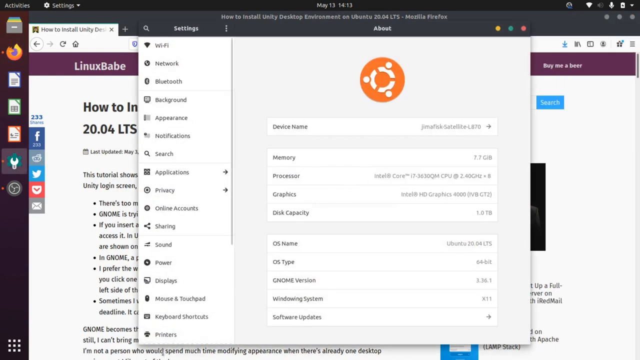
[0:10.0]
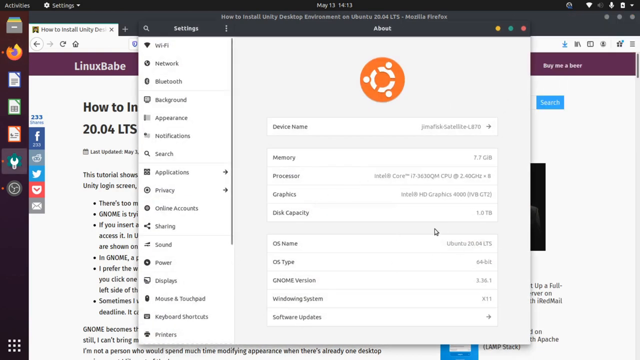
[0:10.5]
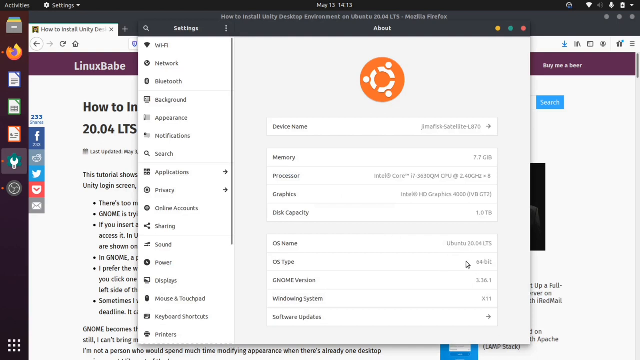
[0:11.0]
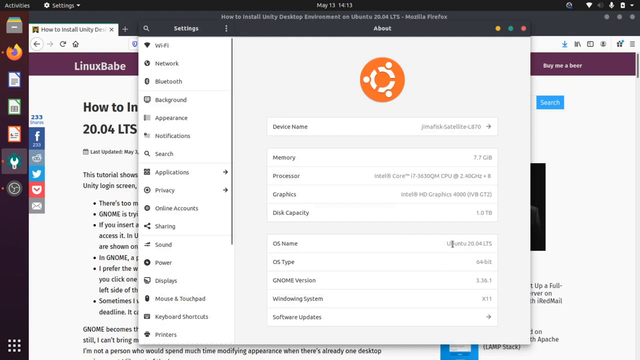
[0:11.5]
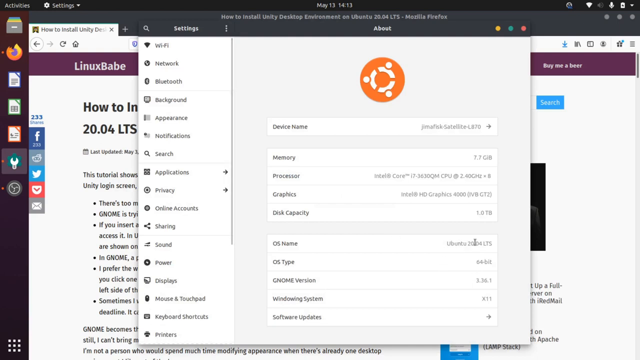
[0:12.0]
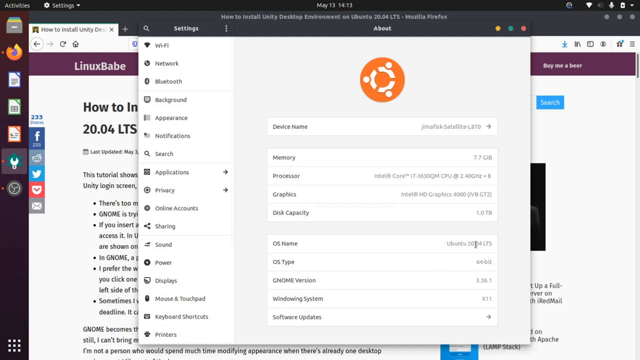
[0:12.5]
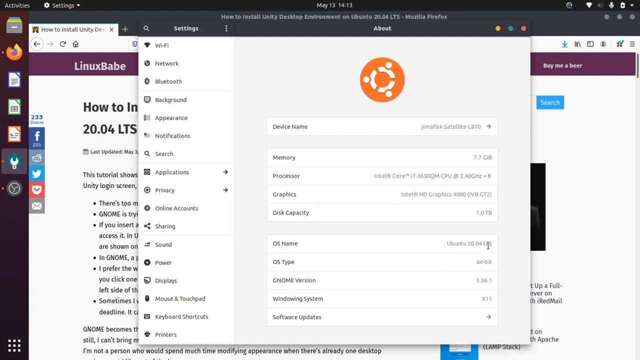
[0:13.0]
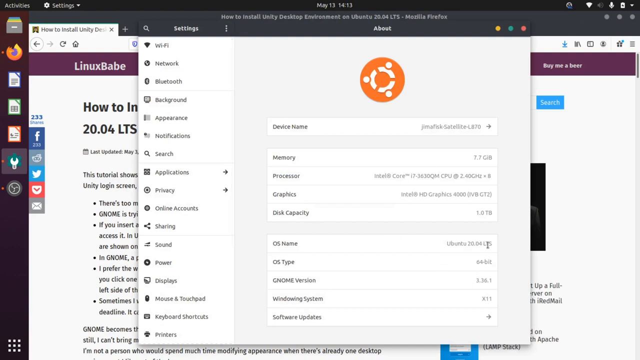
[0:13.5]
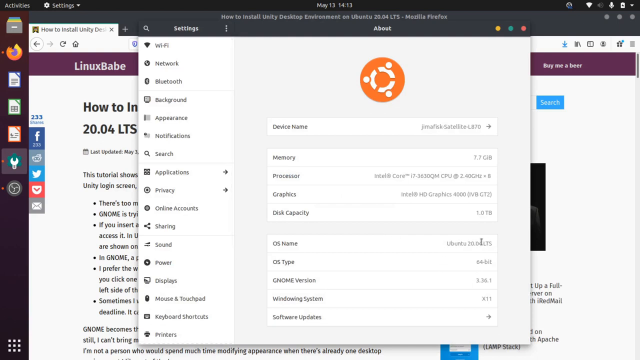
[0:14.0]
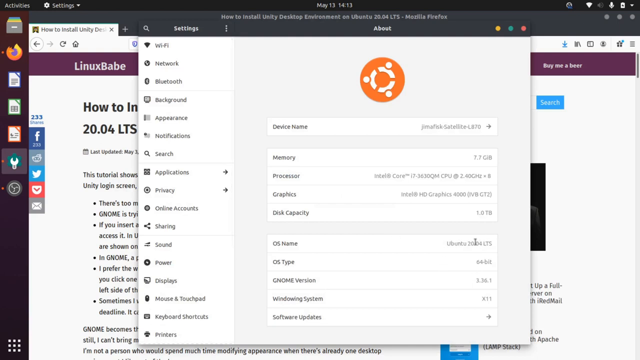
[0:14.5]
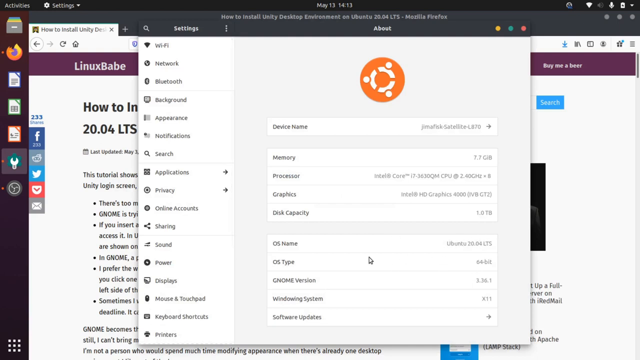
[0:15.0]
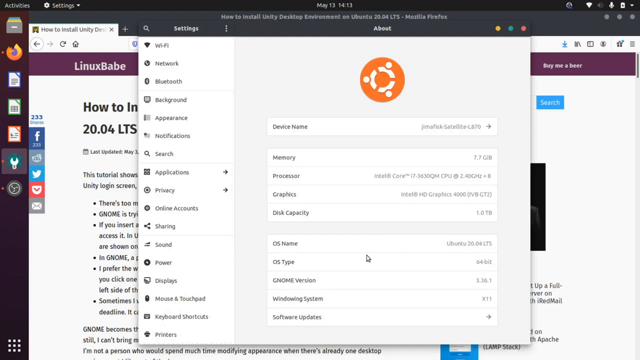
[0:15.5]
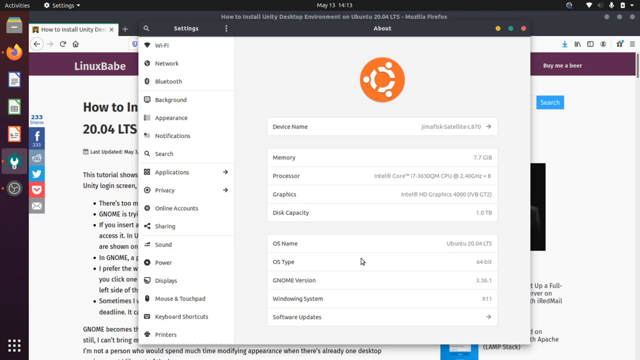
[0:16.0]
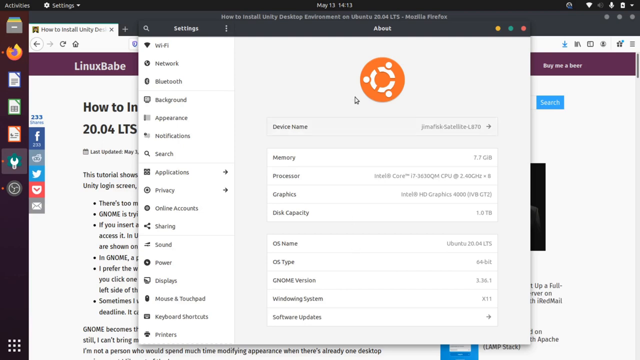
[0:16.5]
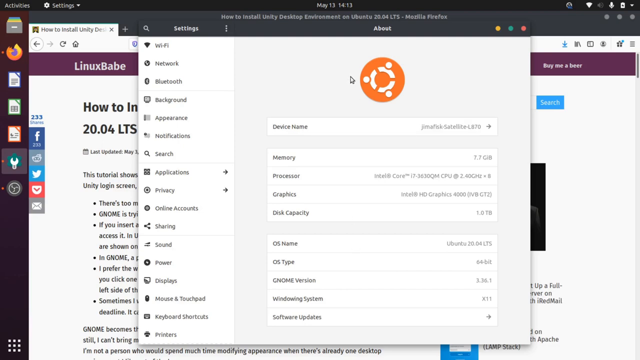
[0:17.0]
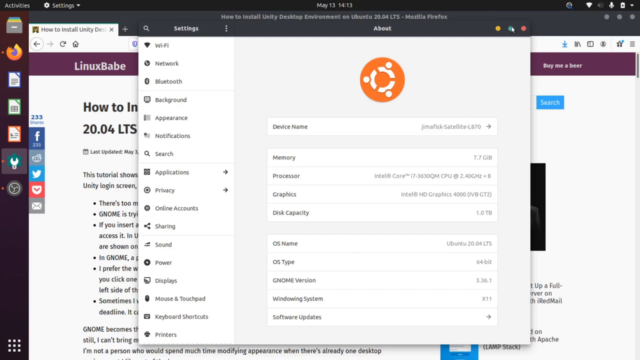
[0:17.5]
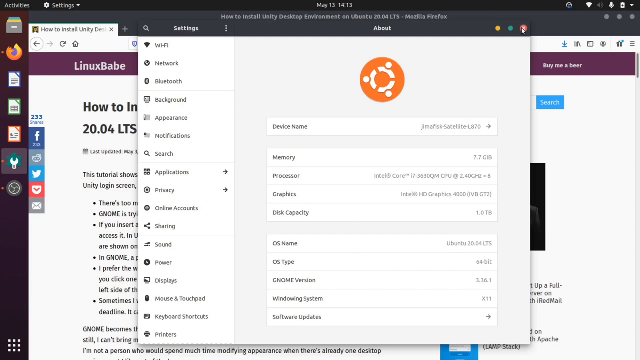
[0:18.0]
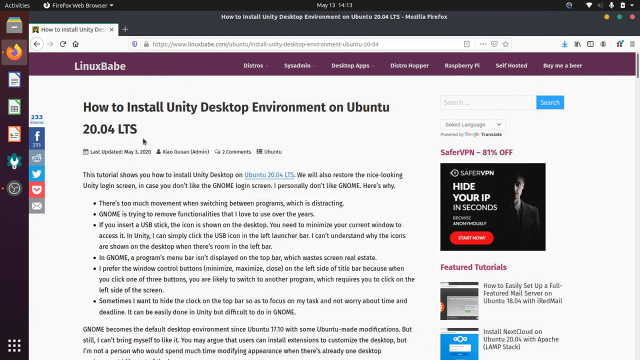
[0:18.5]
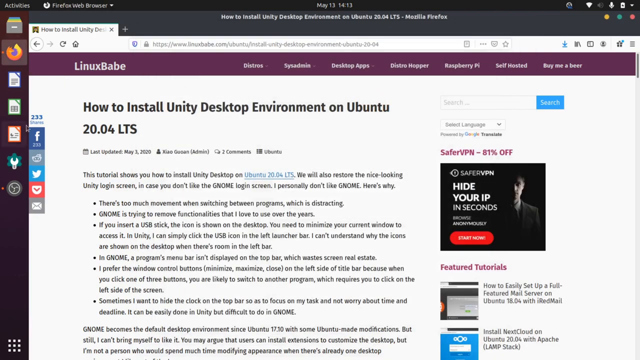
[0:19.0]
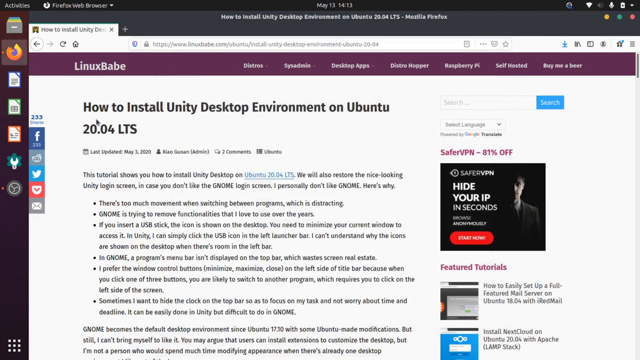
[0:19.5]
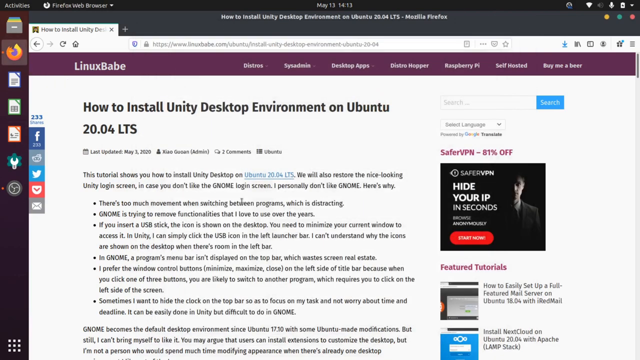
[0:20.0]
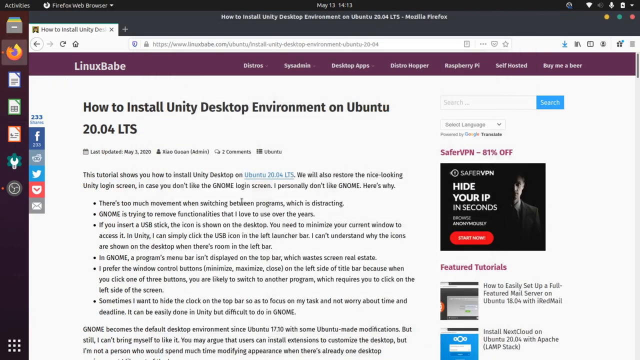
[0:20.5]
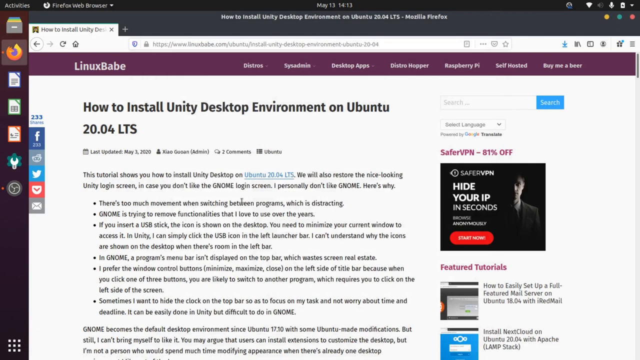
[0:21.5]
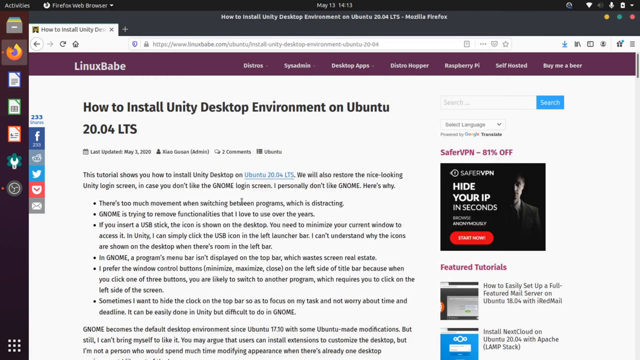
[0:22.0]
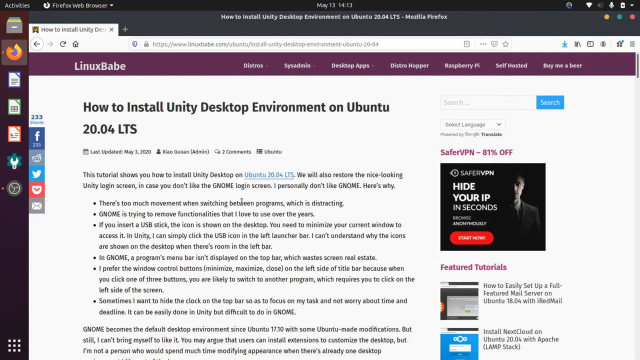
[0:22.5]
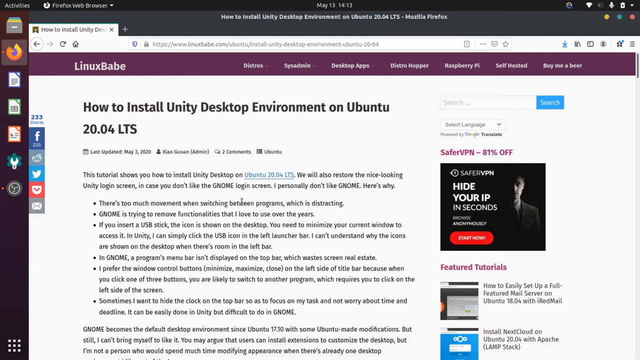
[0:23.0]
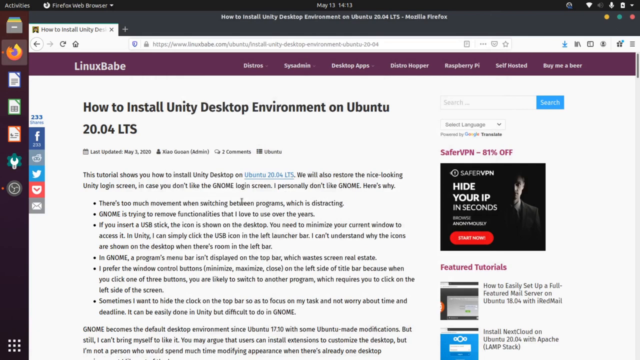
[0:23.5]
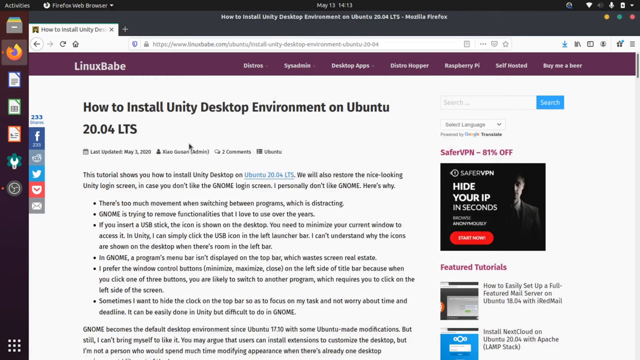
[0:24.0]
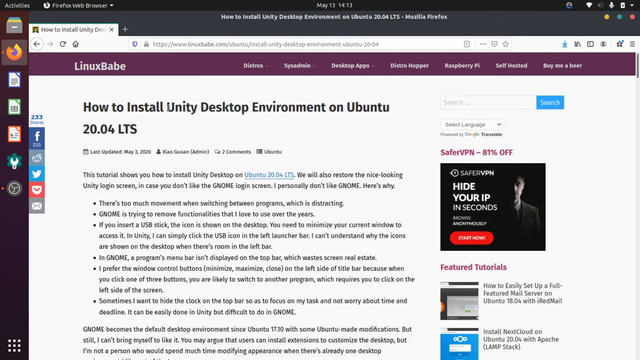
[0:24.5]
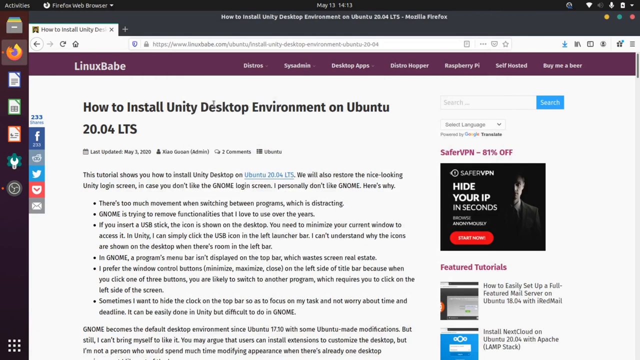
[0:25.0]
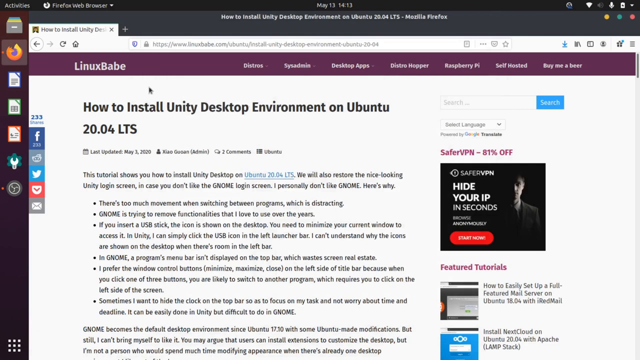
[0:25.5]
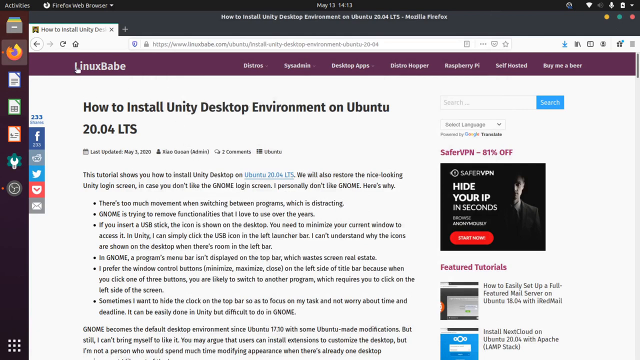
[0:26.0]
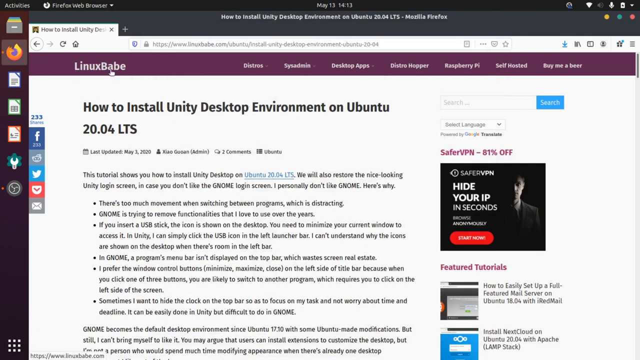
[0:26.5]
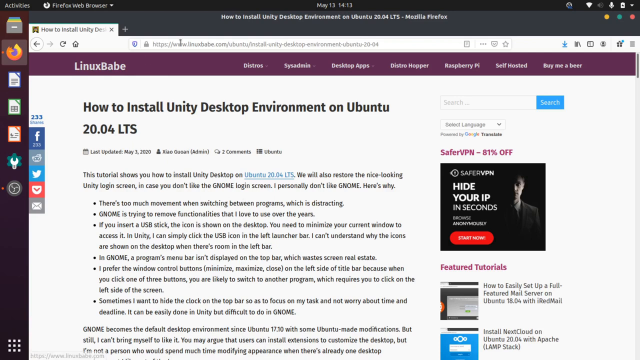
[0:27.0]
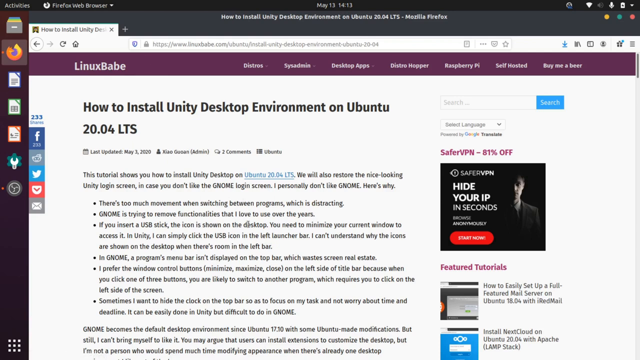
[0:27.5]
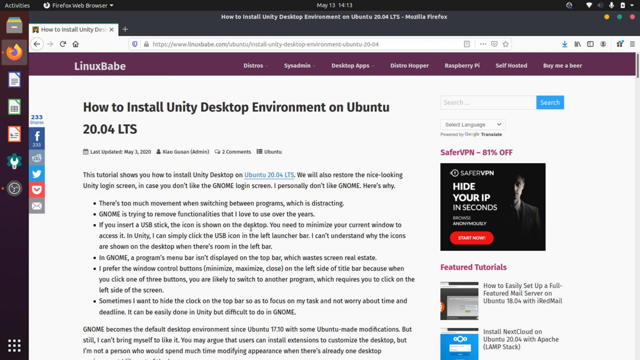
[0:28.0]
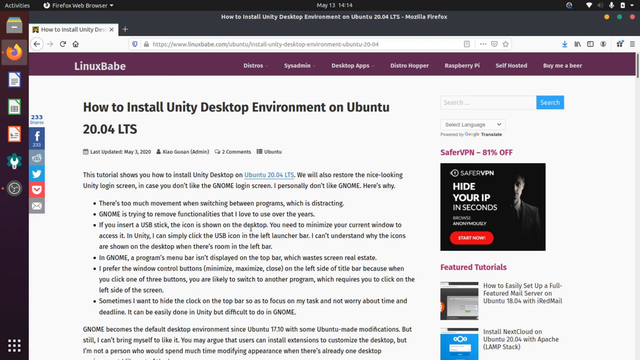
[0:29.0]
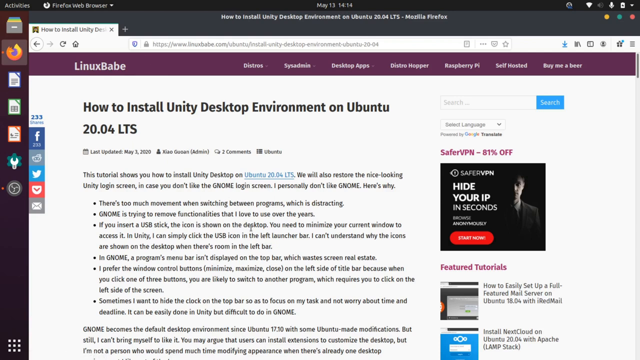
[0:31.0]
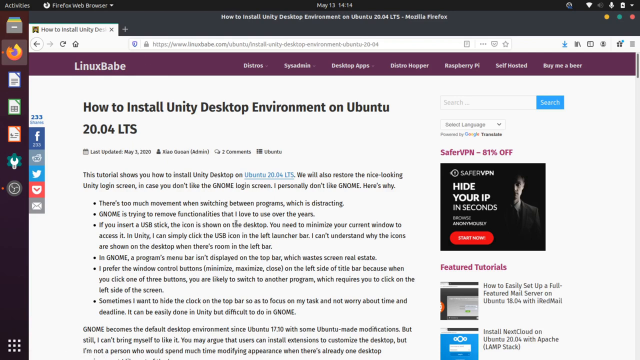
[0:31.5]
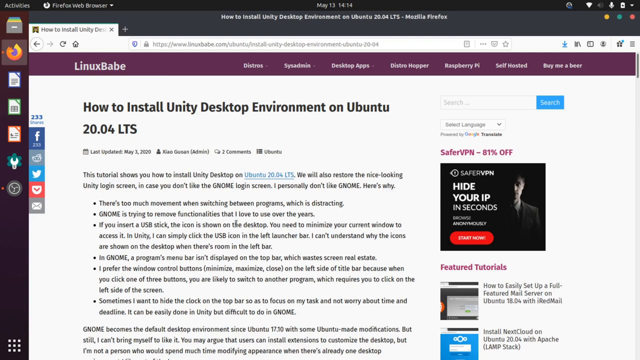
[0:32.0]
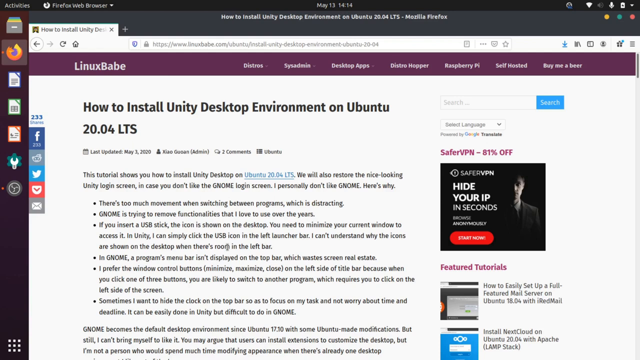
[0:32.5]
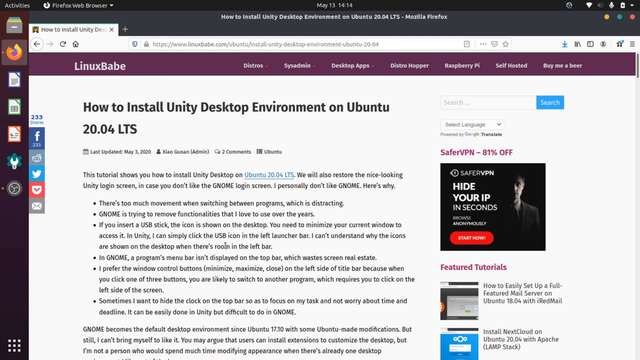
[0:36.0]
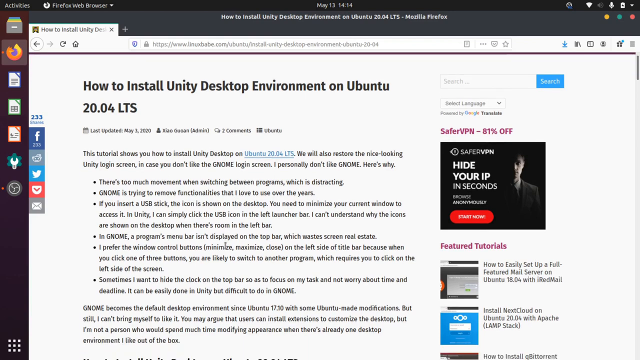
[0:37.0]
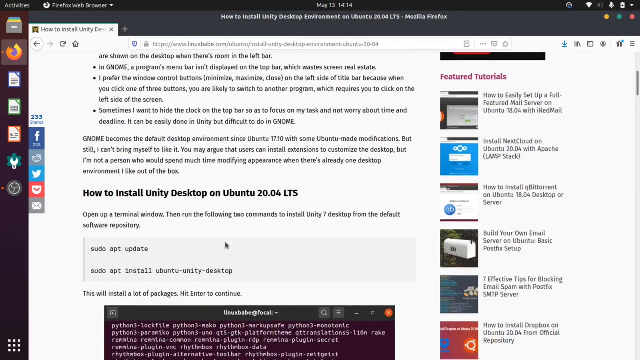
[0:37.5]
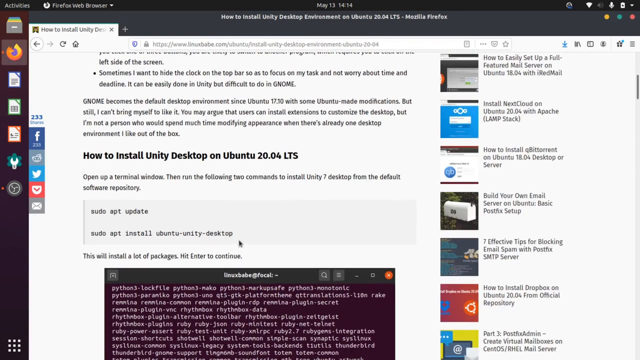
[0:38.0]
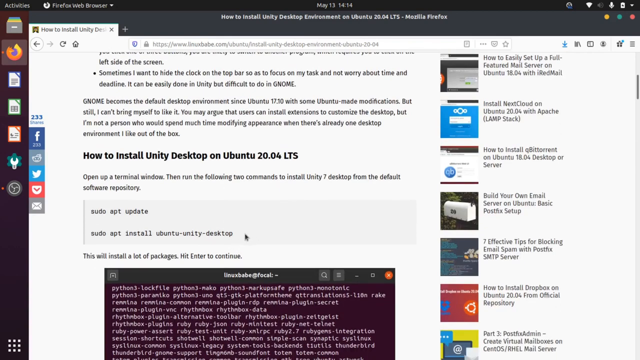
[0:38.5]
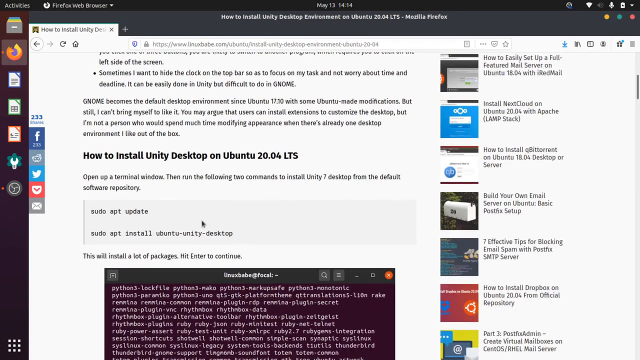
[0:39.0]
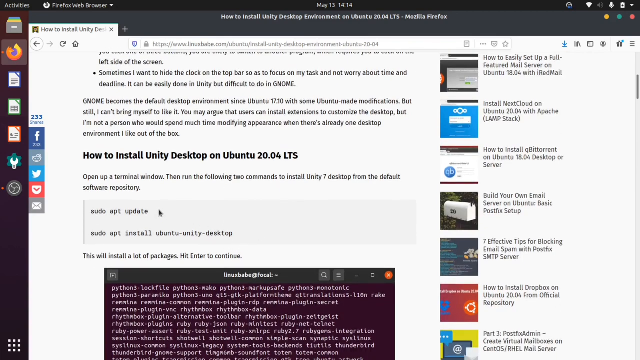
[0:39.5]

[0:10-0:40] On a Windows PC, the LinuxBabe website shows an article titled "How to Install Unity Desktop Environment on Ubuntu 20.04 LTS Mozilla Firefox." Over the top of the page is a Windows settings box with several tabs on the left, from Wi-Fi to printers. The cursor clicks the close button and closes the box, leaving the Linux page with the article. The cursor moves randomly across the page, then the page is scrolled to the bottom, where there is some code within a box. The cursor clicks a link, which brings the Wi-Fi settings box back up.